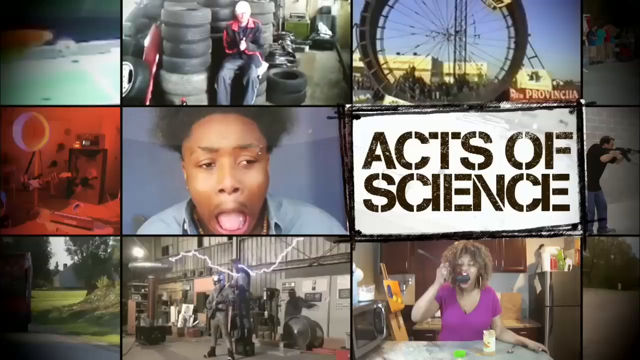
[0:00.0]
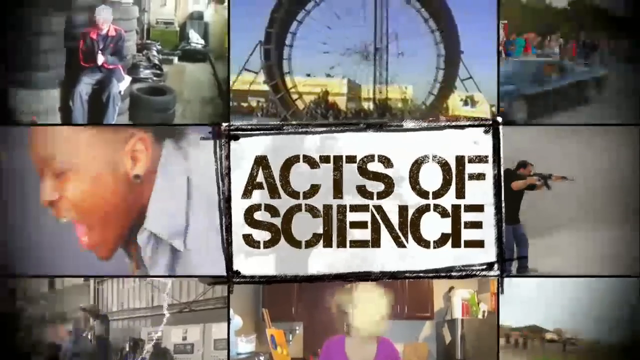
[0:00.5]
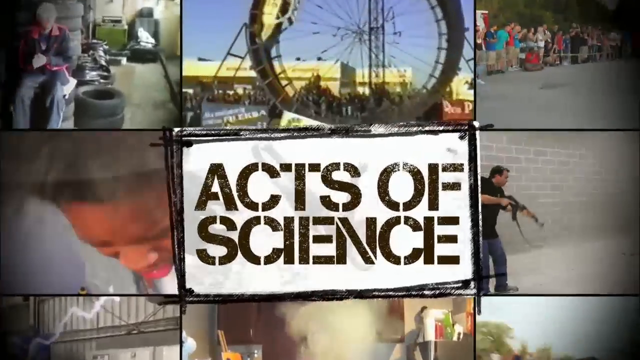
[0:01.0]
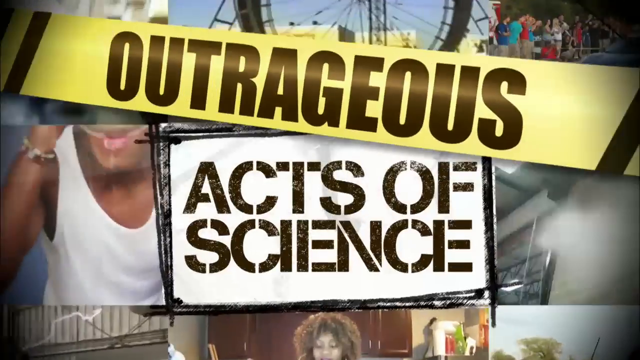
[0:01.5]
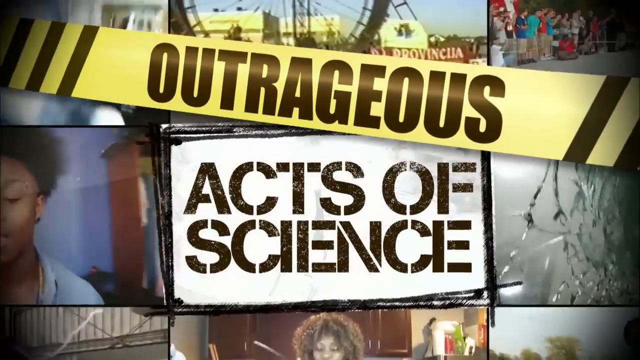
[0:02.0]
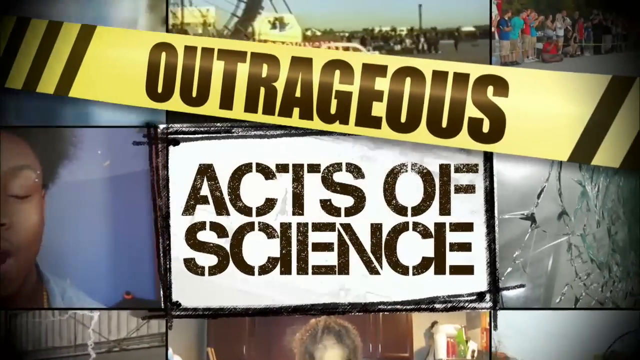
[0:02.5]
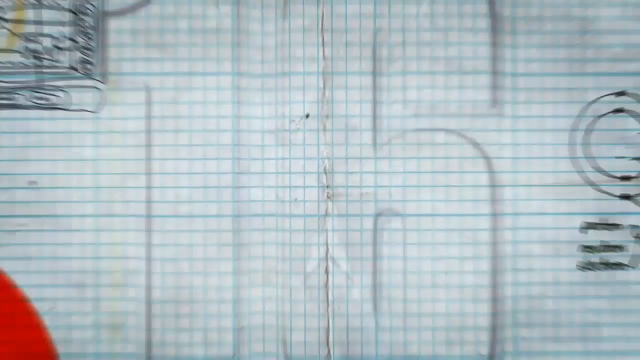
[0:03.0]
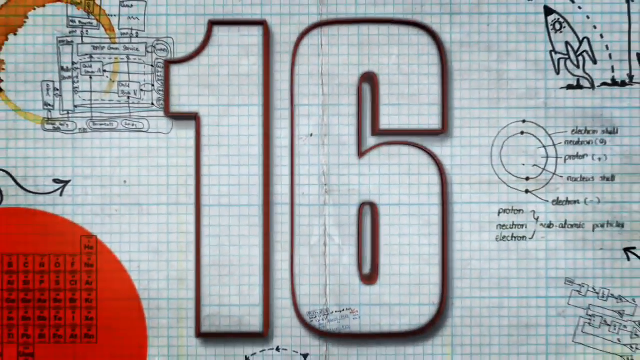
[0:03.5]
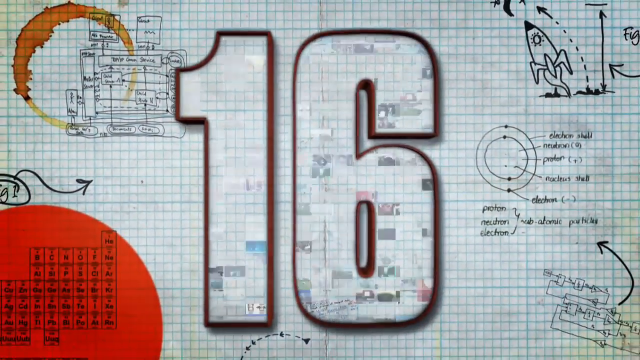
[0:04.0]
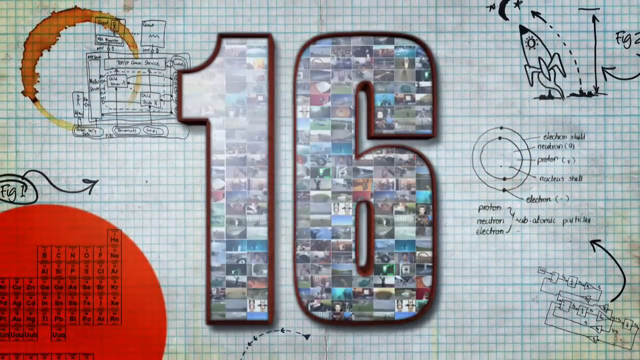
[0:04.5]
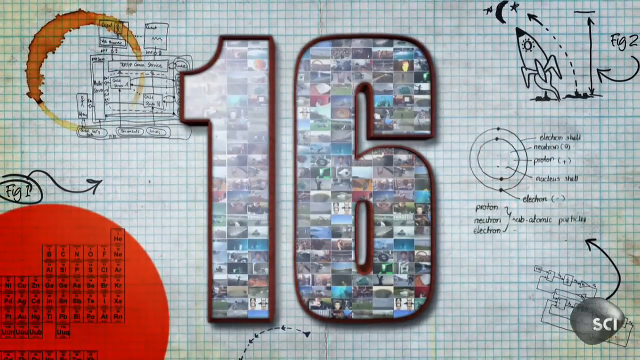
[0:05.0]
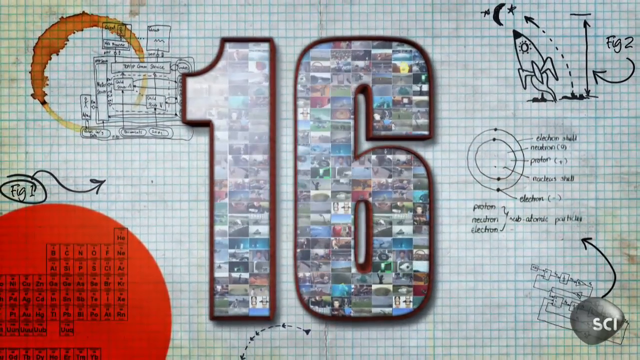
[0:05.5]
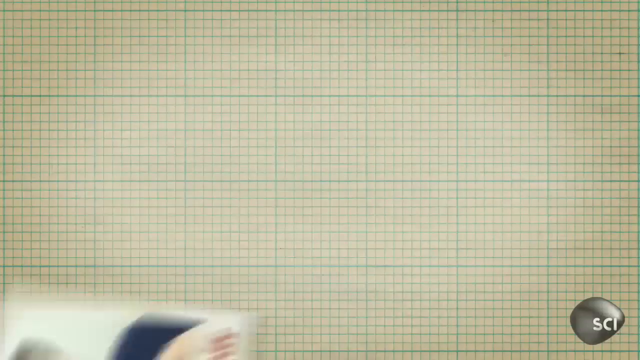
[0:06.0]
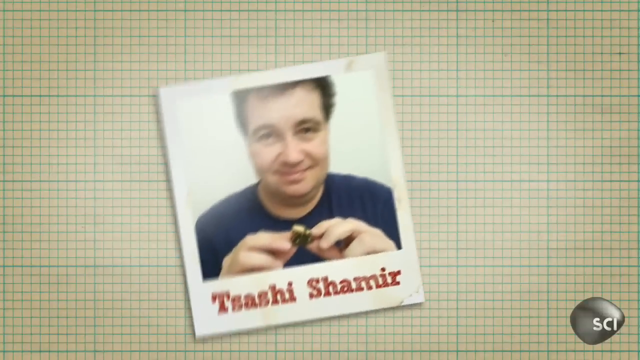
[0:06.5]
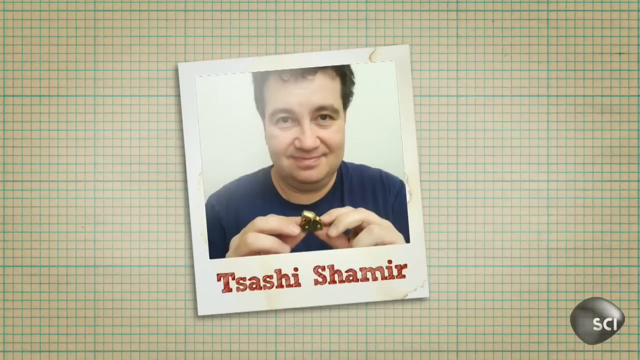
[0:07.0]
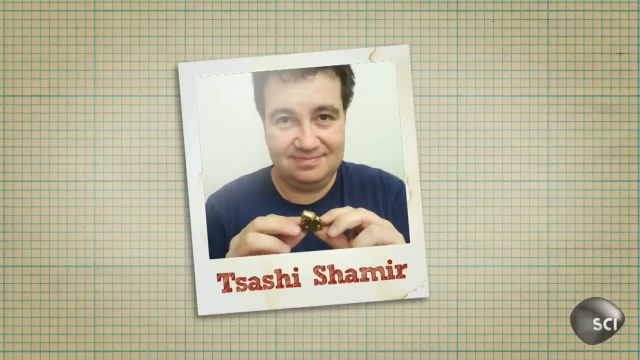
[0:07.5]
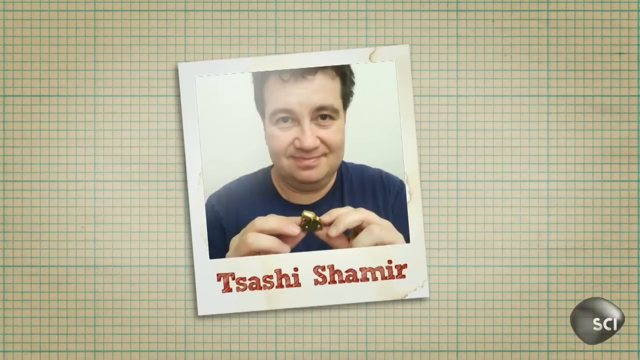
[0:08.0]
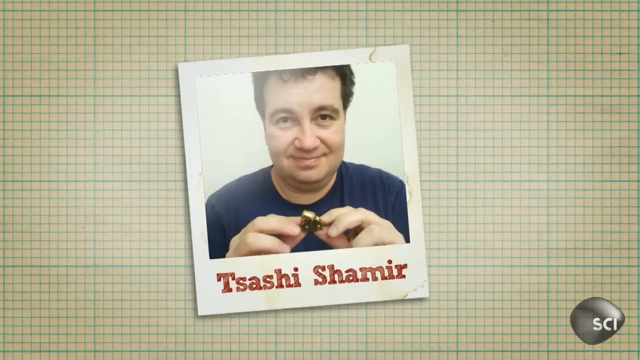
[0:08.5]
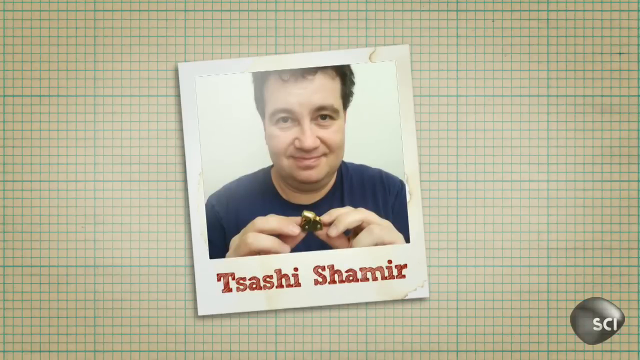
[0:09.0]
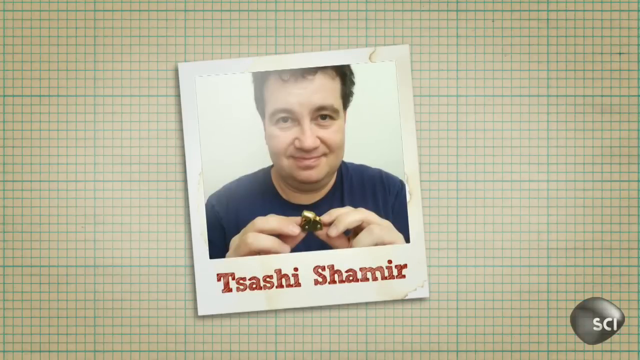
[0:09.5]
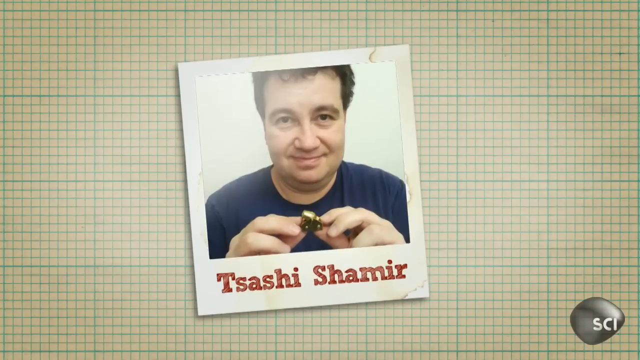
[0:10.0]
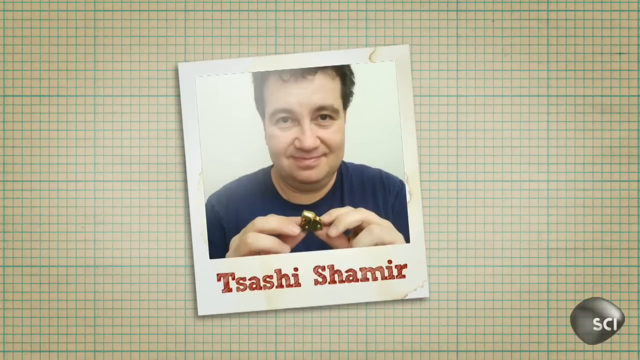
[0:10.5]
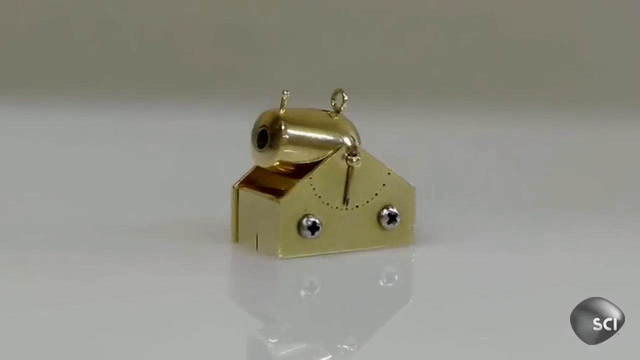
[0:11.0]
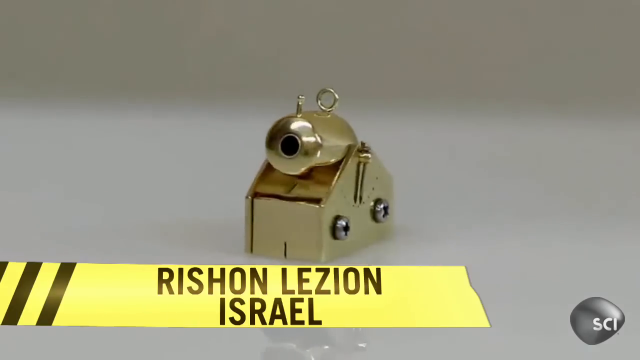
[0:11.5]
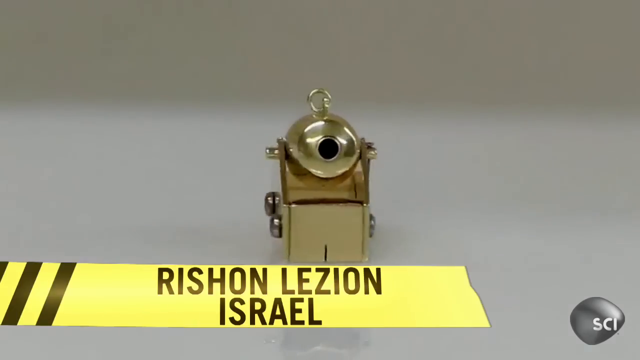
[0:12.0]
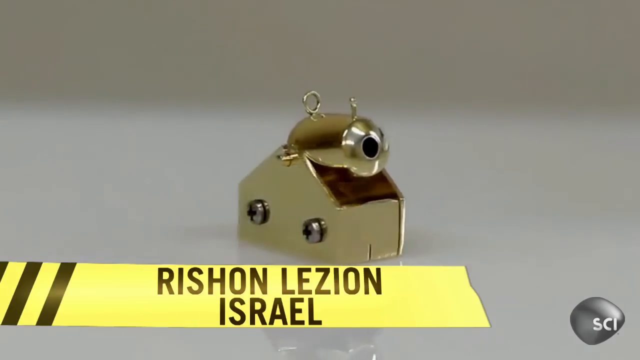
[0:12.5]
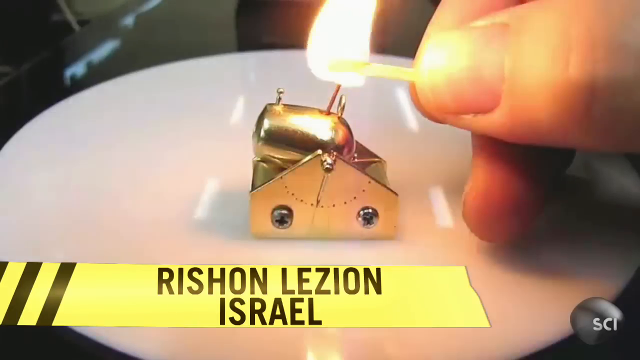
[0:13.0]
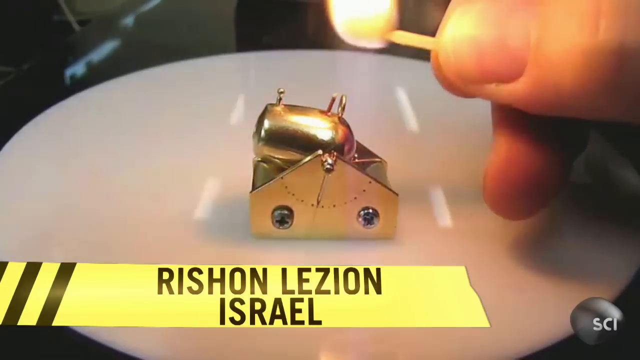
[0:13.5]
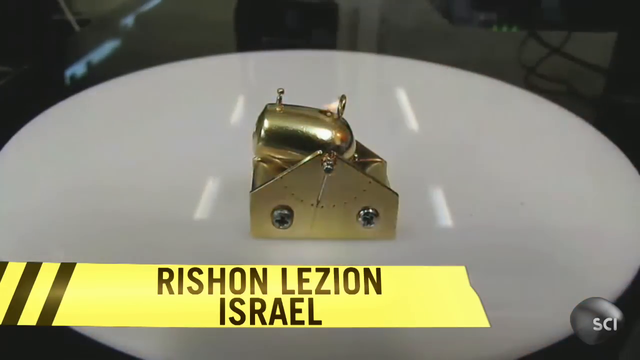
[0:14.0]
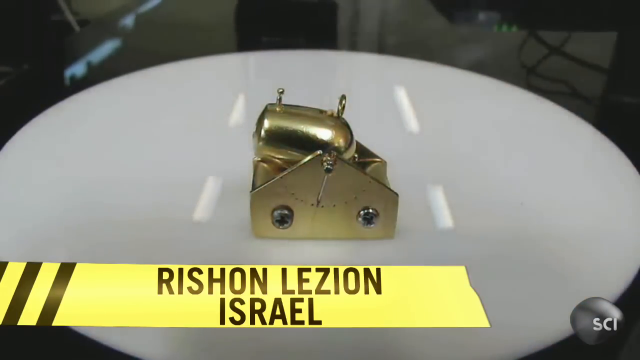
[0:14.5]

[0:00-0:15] The video opens with a series of small screens, then the title "Outrageous Acts of Science" appears with the number 16, which fills in with a collection of pictures. A picture of a man follows, apparently named Tashir Shamir, along with what looks like a small miniature cannon. Text reads "Rishon Lazon Israel", apparently where he is from. Someone lights the miniature cannon, but the shot does not show what happens after it is lit.